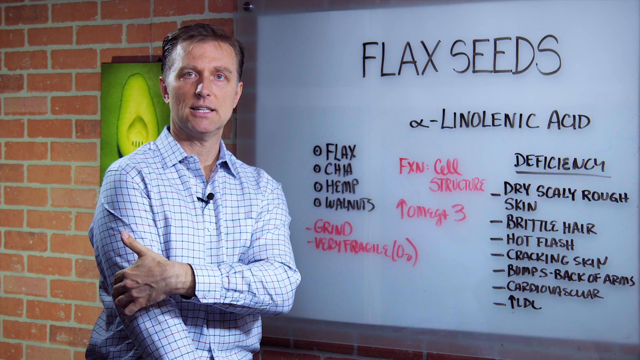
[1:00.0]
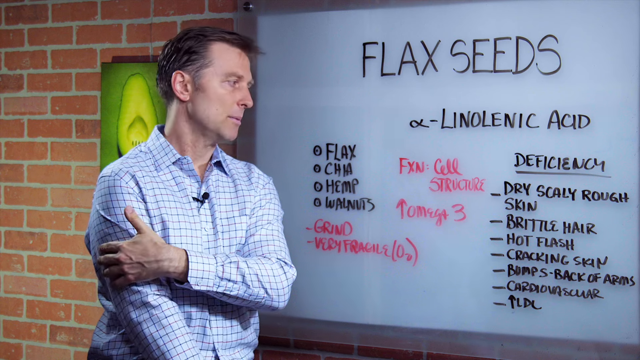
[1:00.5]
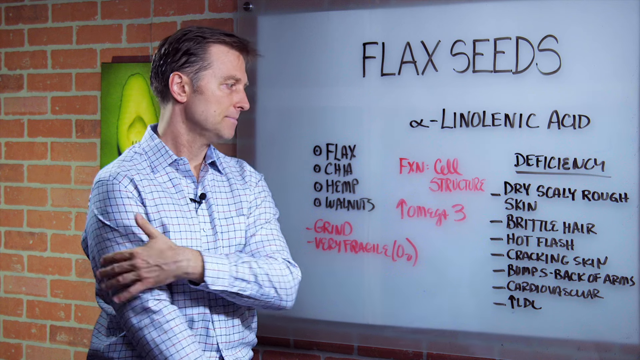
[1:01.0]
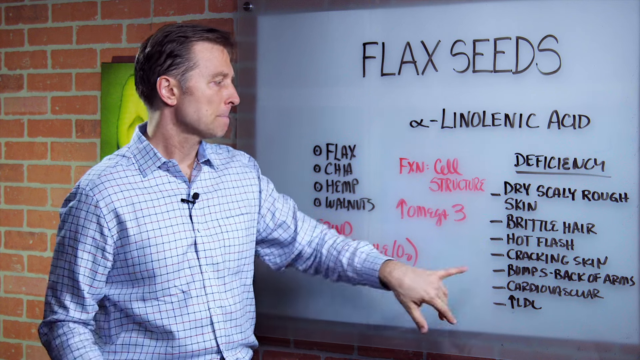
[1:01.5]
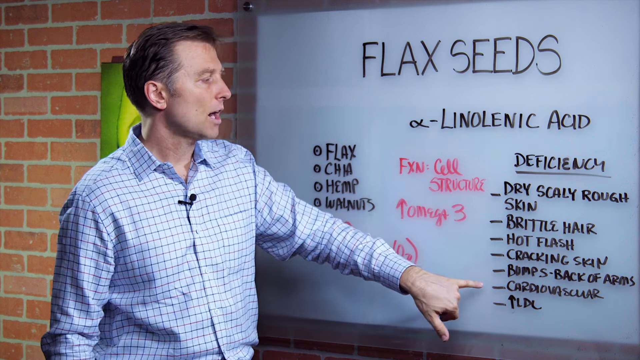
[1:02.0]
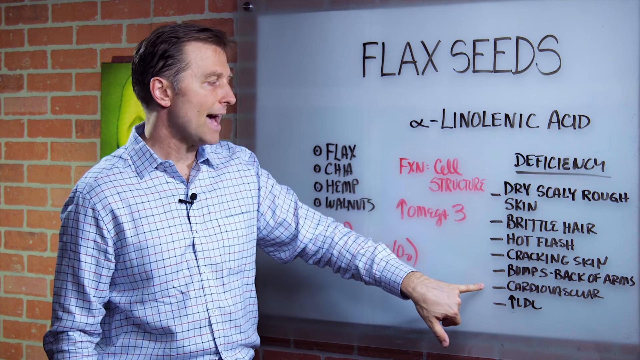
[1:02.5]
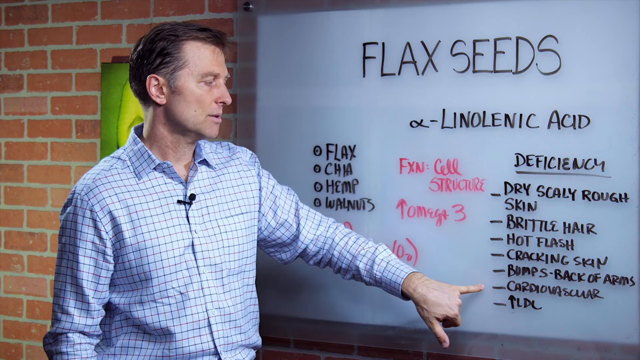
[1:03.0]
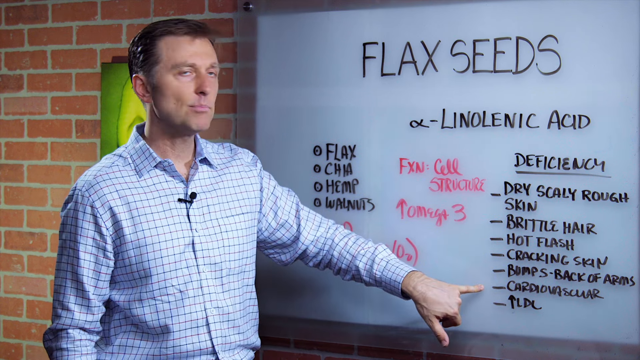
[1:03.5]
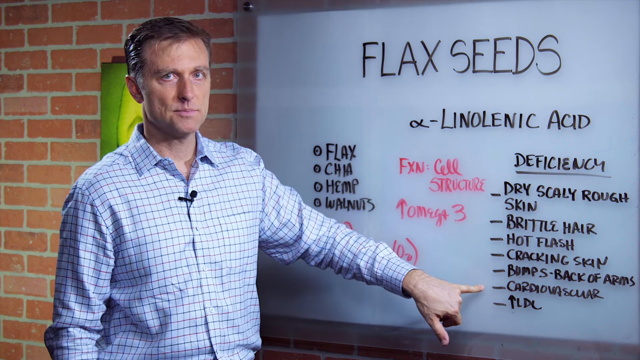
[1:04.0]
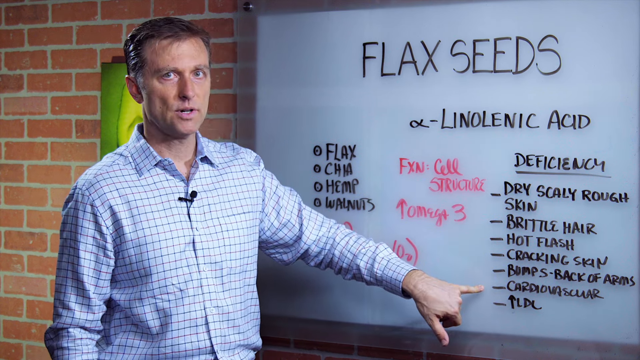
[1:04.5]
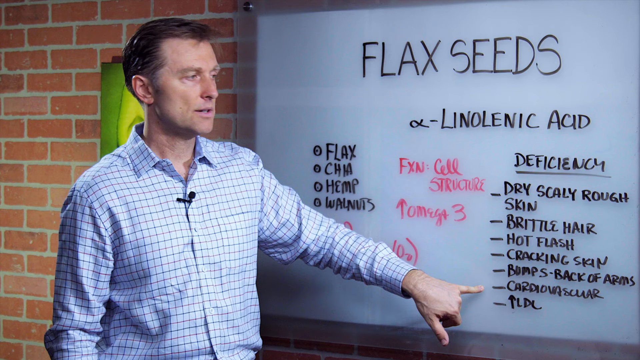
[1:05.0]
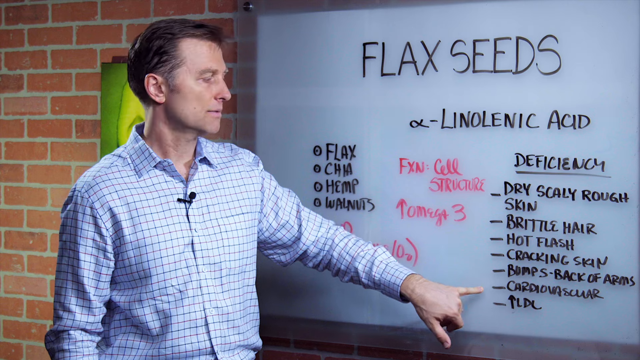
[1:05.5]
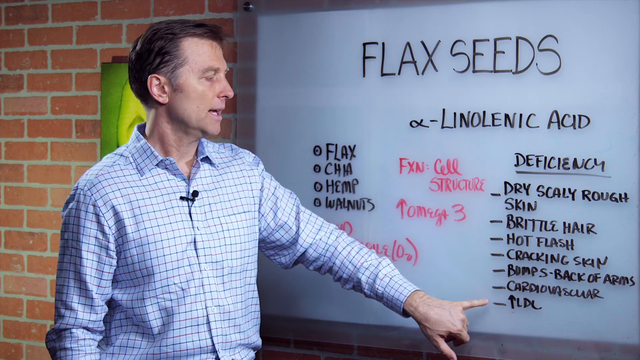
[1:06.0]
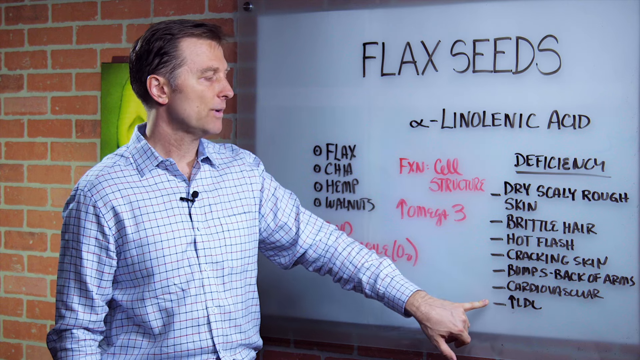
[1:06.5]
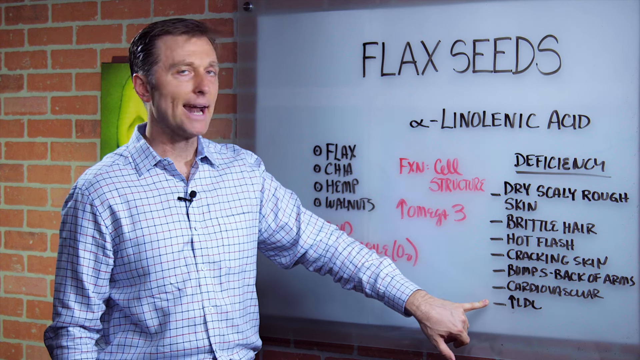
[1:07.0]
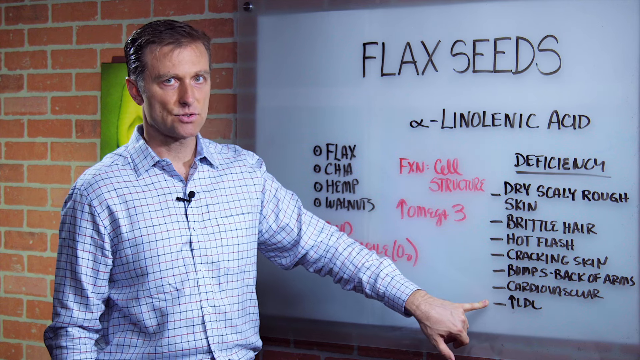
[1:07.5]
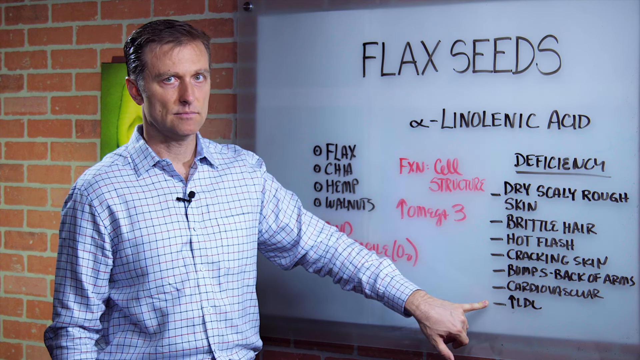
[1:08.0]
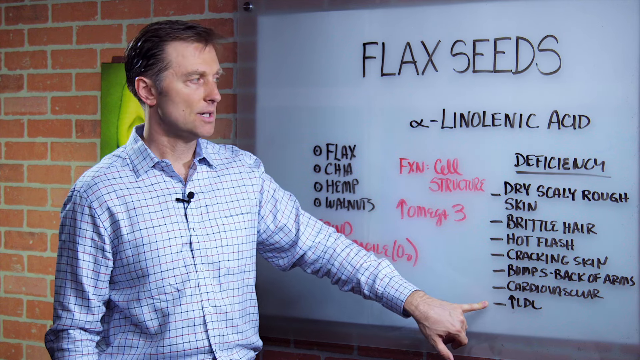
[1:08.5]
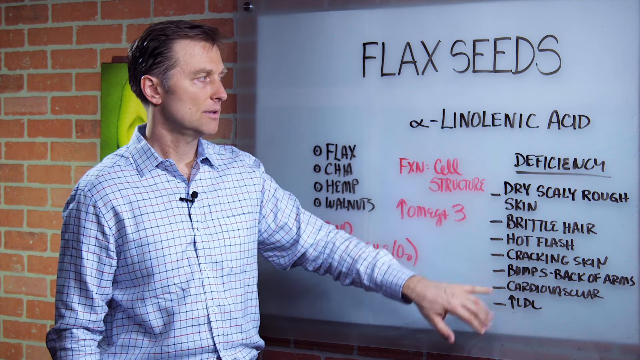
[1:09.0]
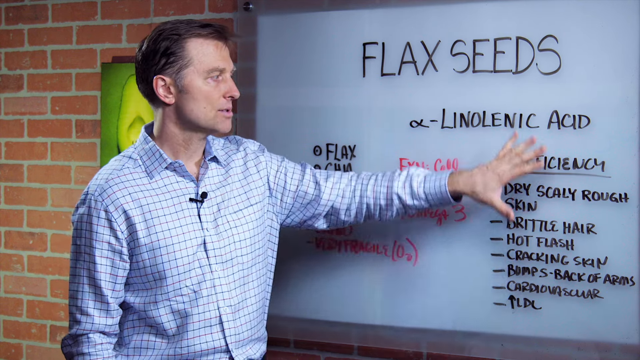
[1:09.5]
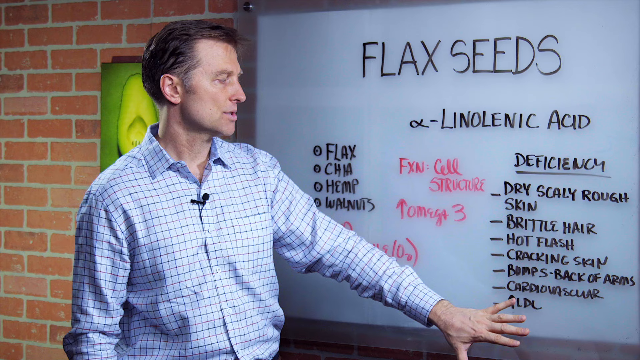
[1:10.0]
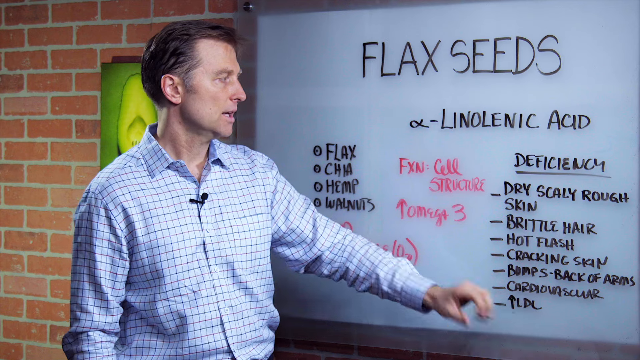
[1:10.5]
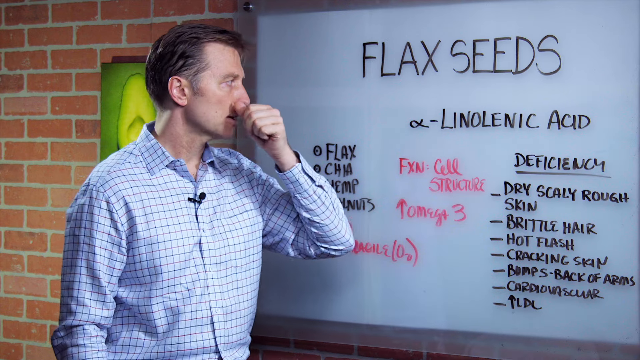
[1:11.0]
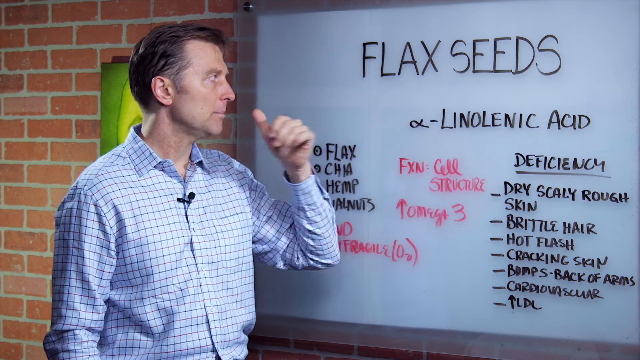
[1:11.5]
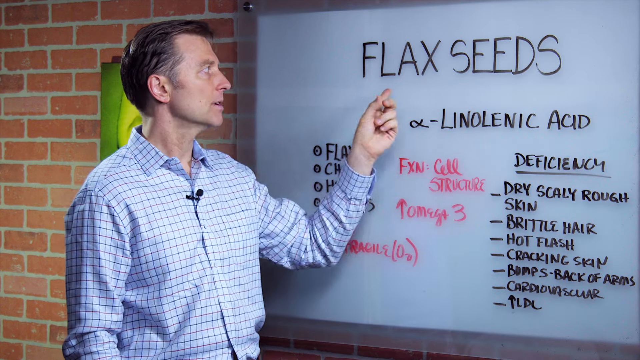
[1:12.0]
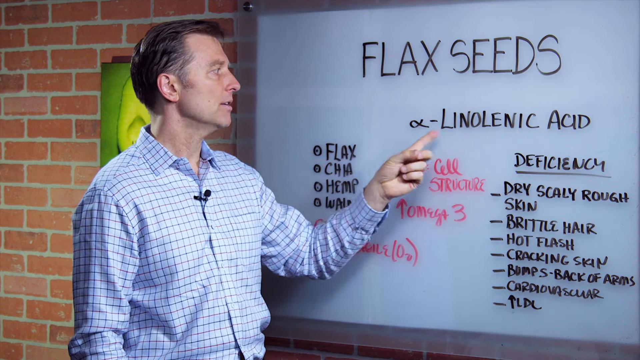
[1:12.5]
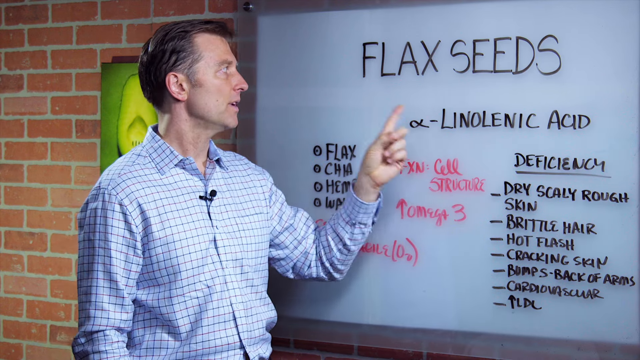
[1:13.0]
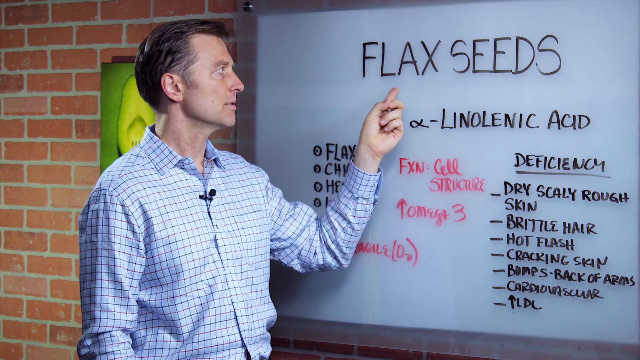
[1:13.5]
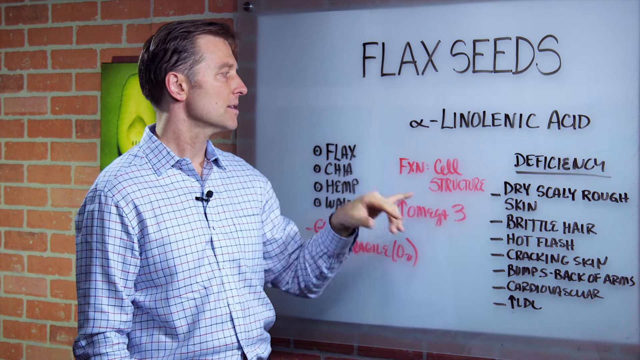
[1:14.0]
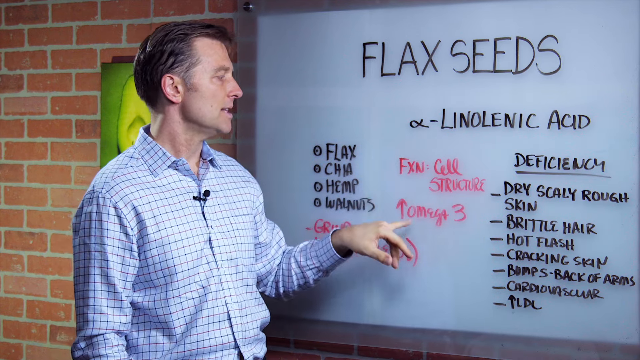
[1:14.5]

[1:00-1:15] A man presents a lesson on flax seeds. The whiteboard says "flax seeds" in large letters, along with smaller words written in black and words in pink. He constantly points to the board, pointing to the large "flax seeds" and to the smaller black words. He itches the side of his nose and rubs his upper right arm with his left hand, then points with his pinky to the categories on the whiteboard. Behind him is a red brick wall with a picture on it, of which only a portion is visible because he has stepped back; it shows a seed surrounded by a green background, the seed itself lime green and cut in half, with a little scooped-out round section.